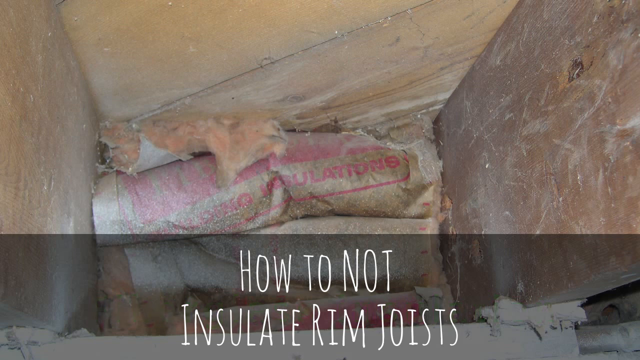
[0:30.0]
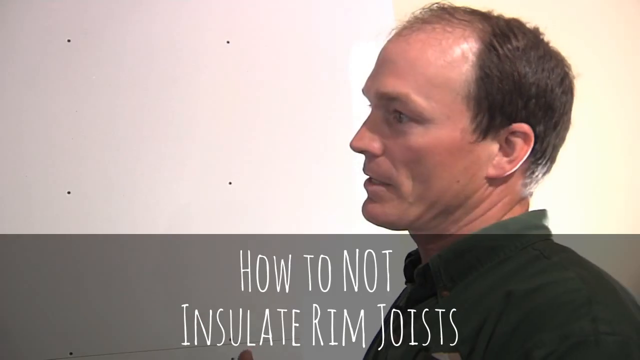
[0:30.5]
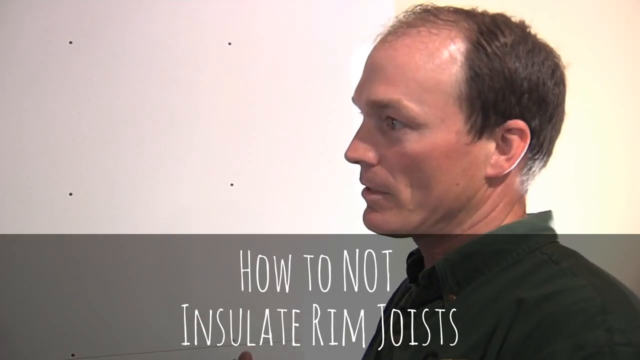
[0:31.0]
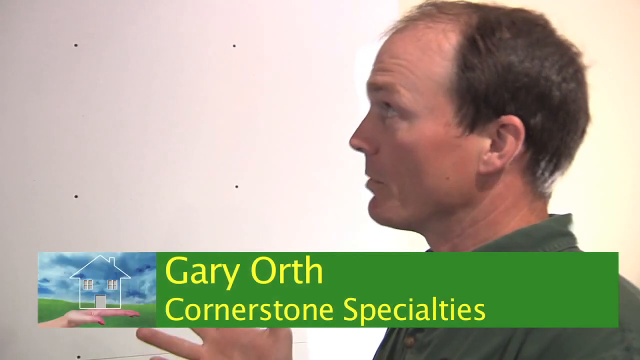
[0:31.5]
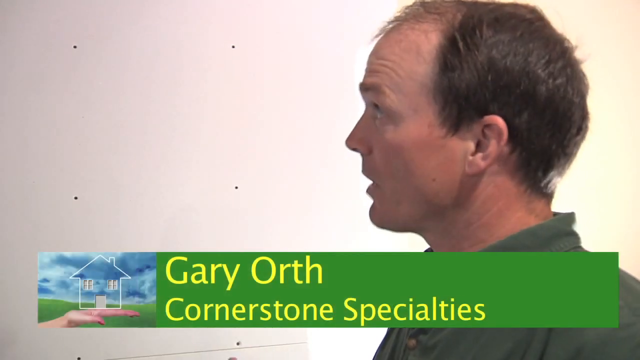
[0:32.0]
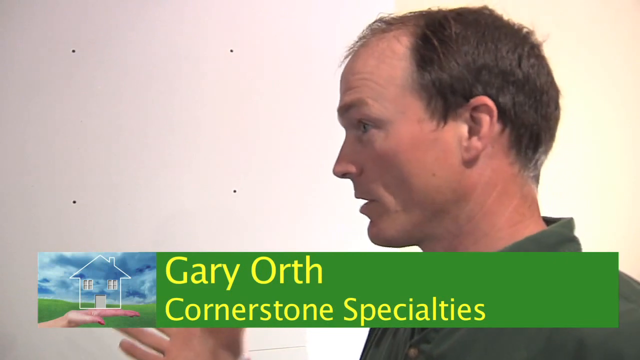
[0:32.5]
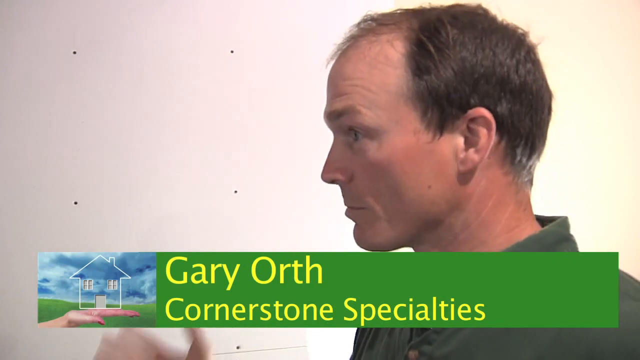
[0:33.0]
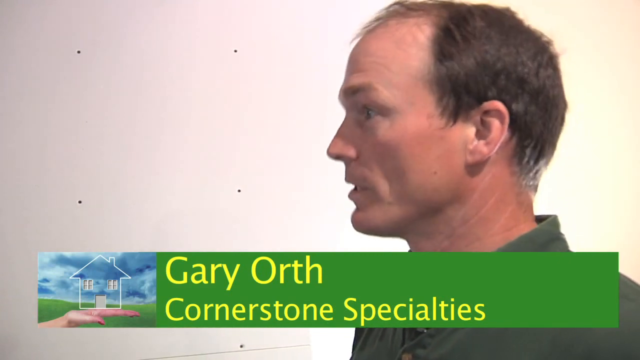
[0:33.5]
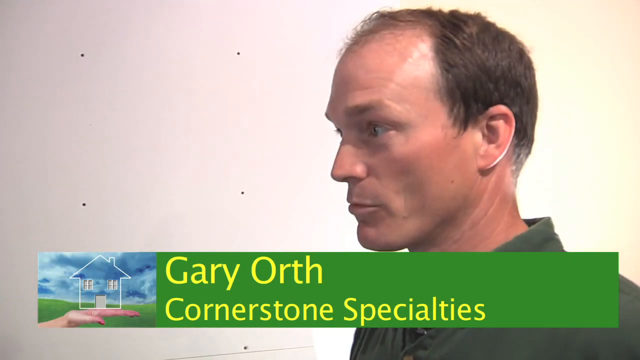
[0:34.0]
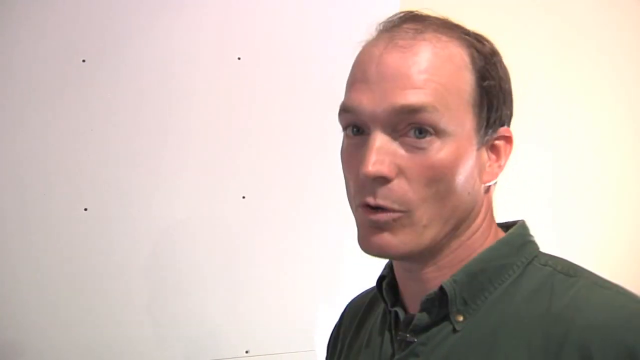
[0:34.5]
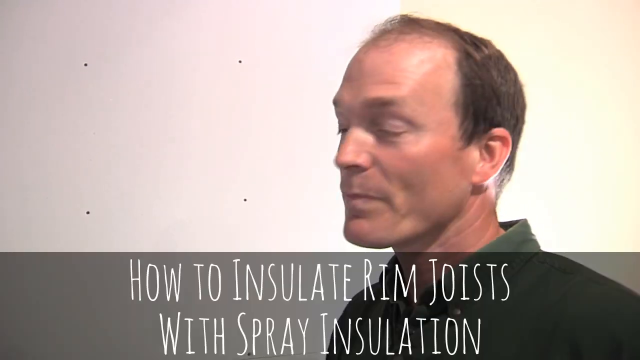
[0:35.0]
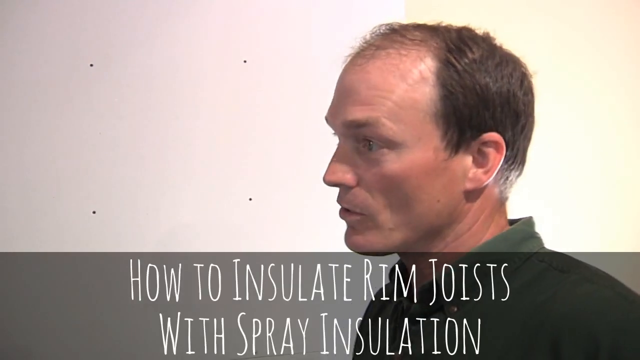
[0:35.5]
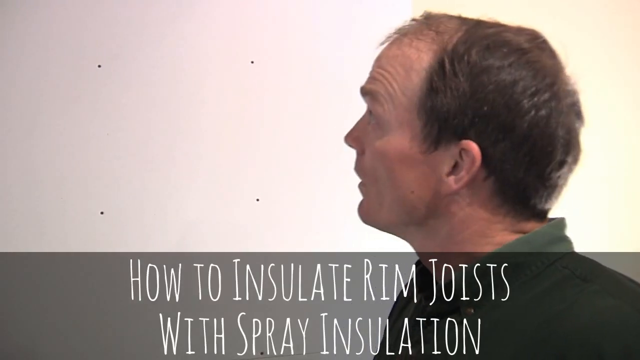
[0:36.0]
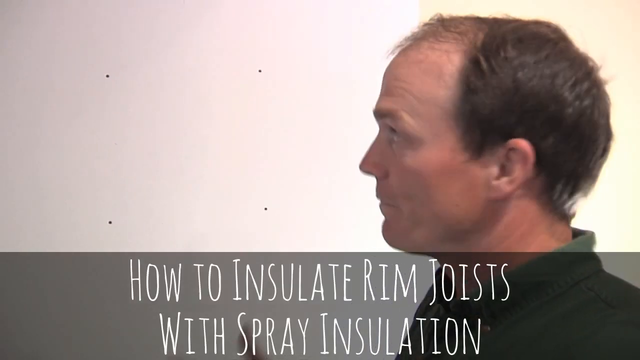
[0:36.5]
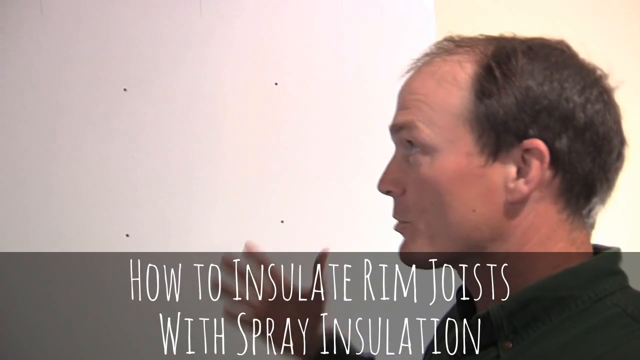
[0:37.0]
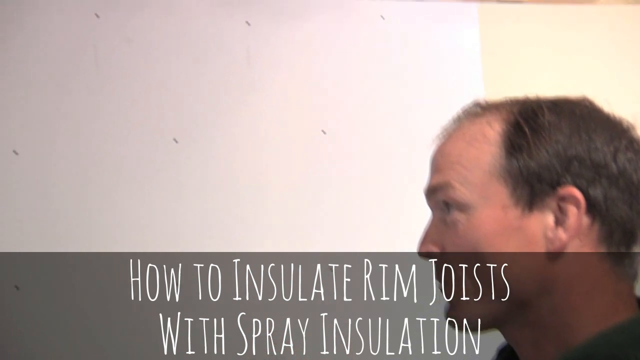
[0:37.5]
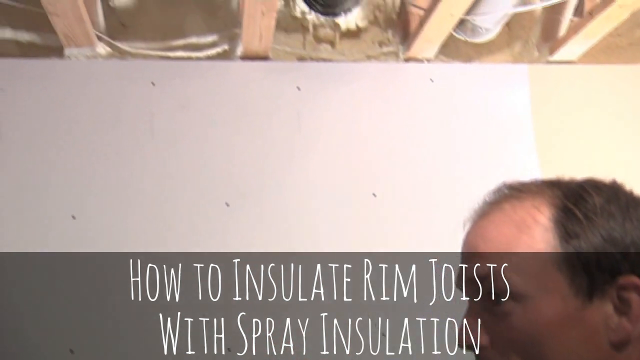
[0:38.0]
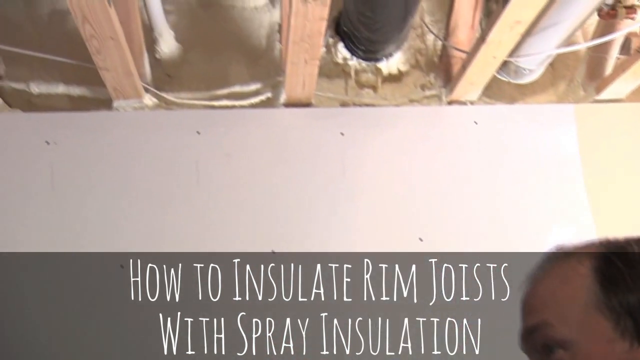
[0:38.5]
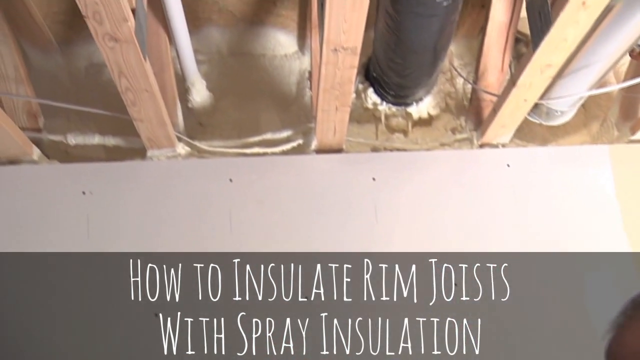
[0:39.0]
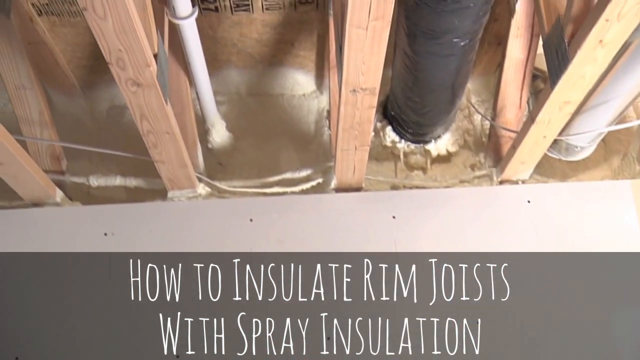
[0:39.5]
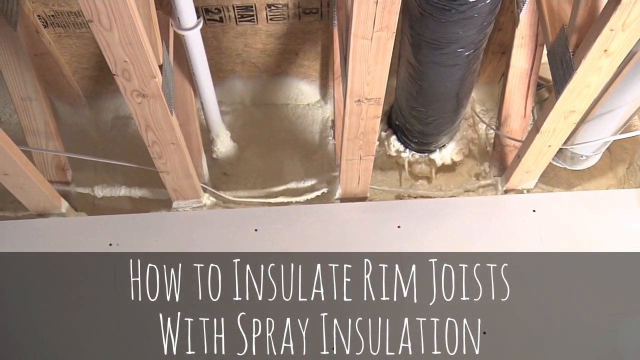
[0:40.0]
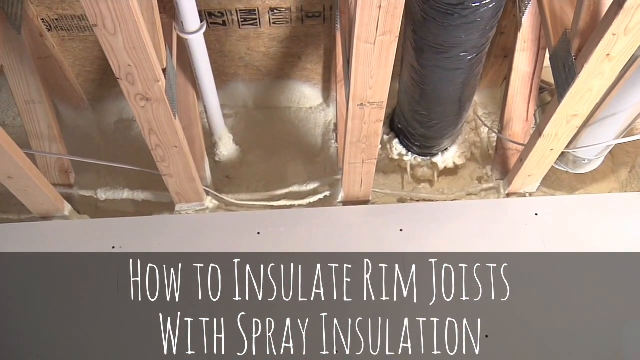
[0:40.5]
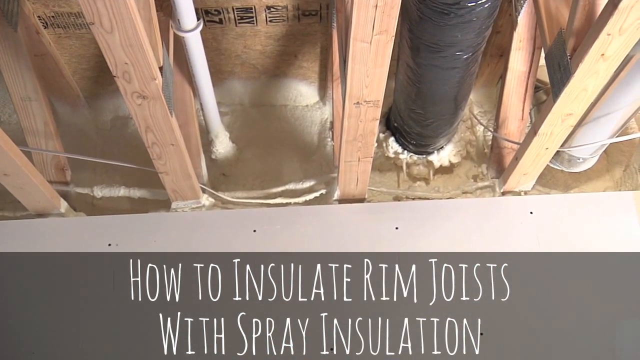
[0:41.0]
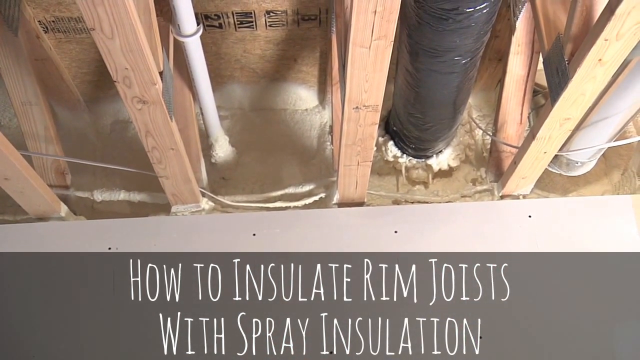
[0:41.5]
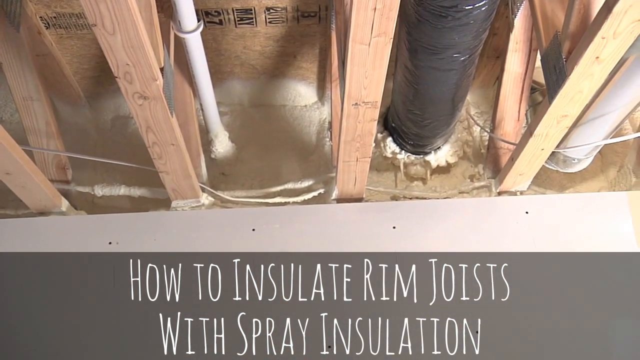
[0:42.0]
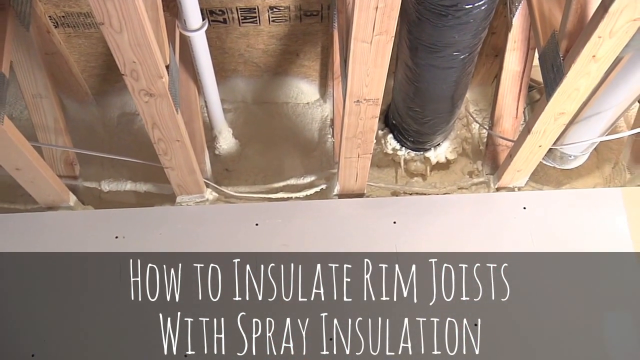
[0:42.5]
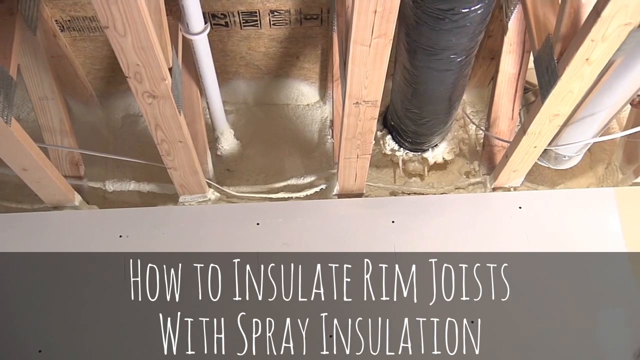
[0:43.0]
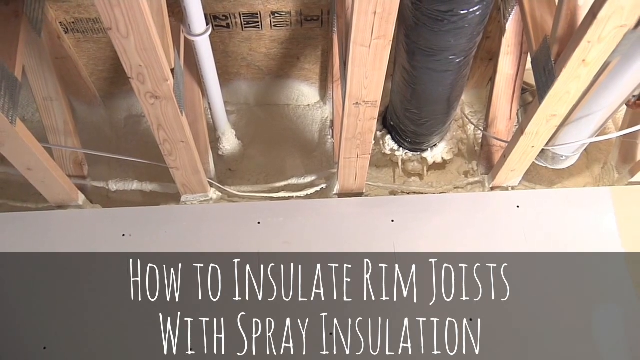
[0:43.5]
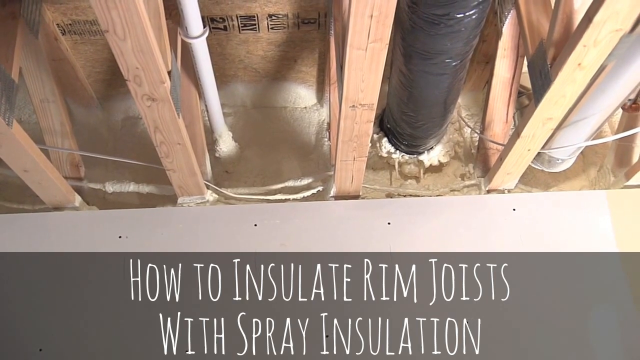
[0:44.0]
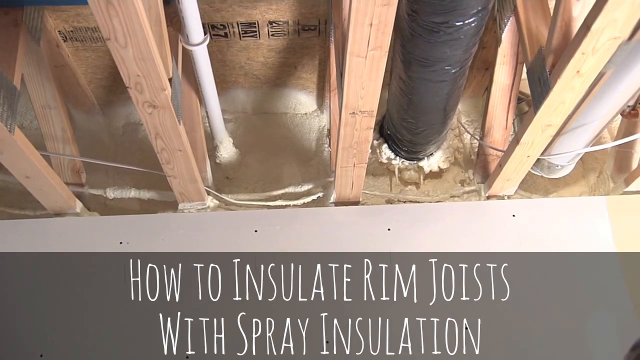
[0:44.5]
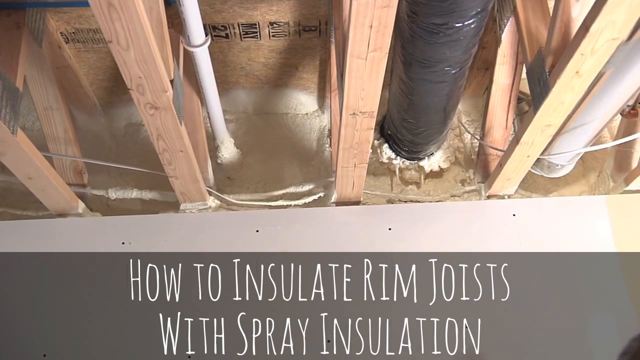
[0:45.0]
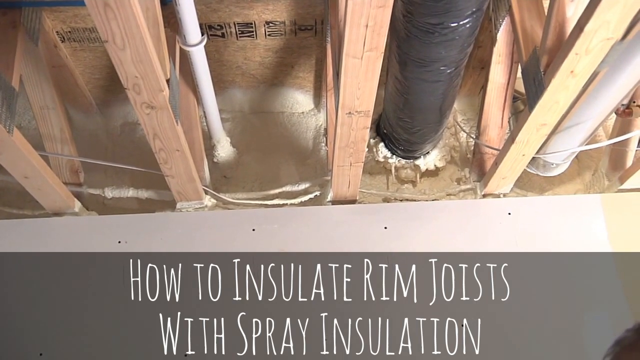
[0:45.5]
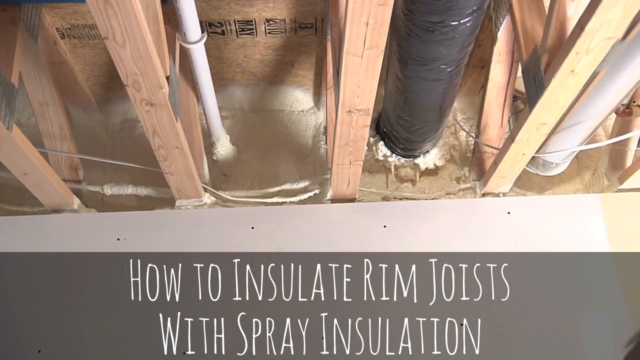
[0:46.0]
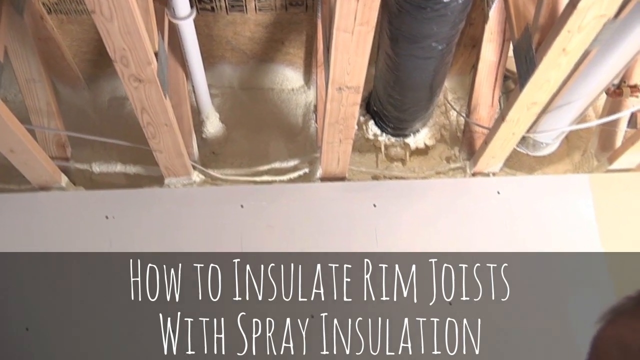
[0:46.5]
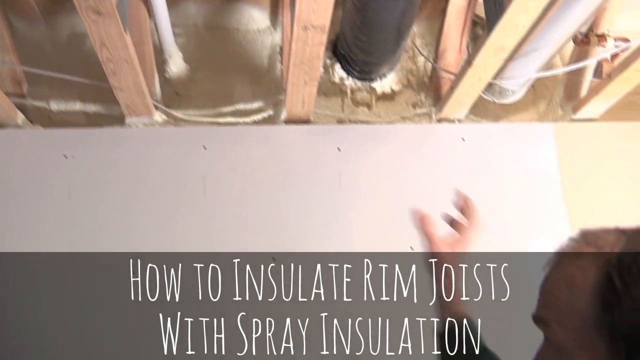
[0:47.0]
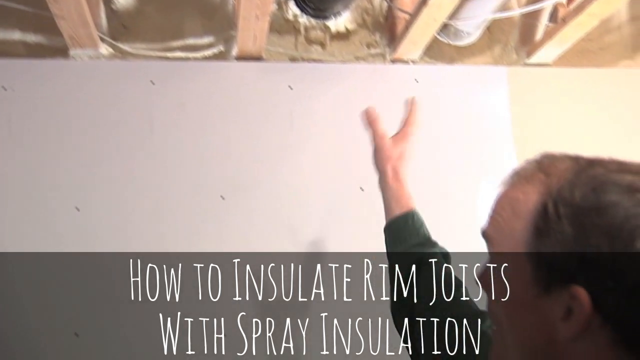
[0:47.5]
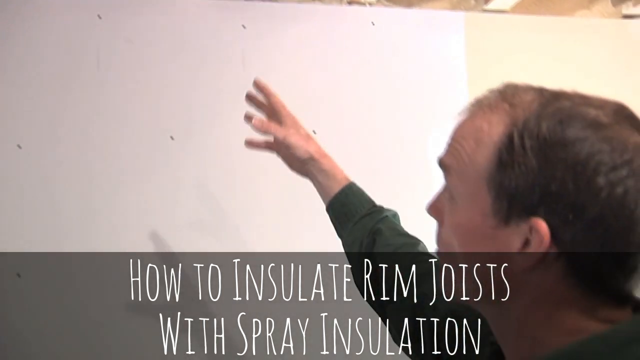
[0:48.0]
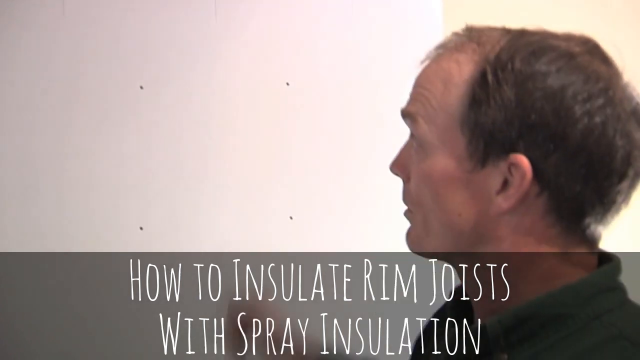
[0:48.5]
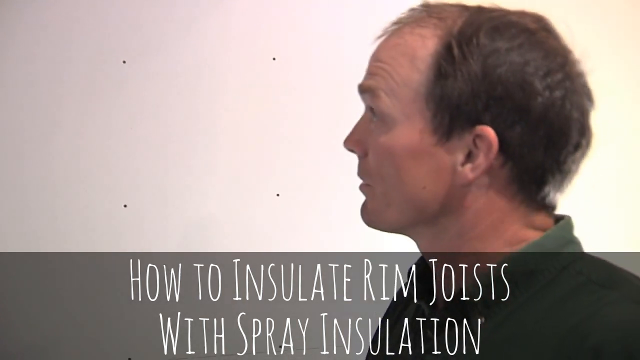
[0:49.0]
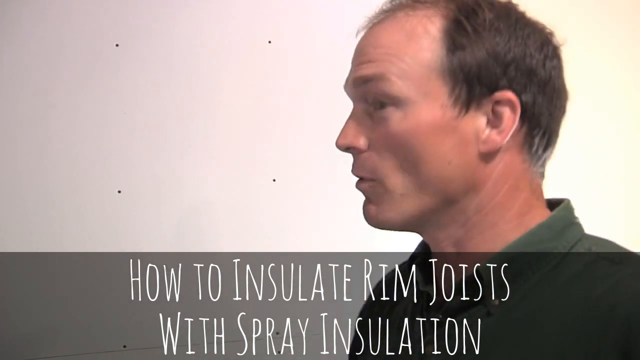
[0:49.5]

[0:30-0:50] Text at the bottom of the screen, written in yellow on a green background, reads "Gori Oth Cornerstone Specialist". The man appears to be talking and explaining something. Another text pops up saying "how to insulate rim joints with spray insulator". The roof is shown with planks visible and three pipes running through the wall: two white and one black. The black pipe is the biggest in diameter, the white pipe to the left of the black one is the smallest, and the white pipe to the right of the black one is the second biggest. The wall of the building or structure is white. The man actively uses hand gestures as he explains, and it looks like he is explaining to someone next to him.